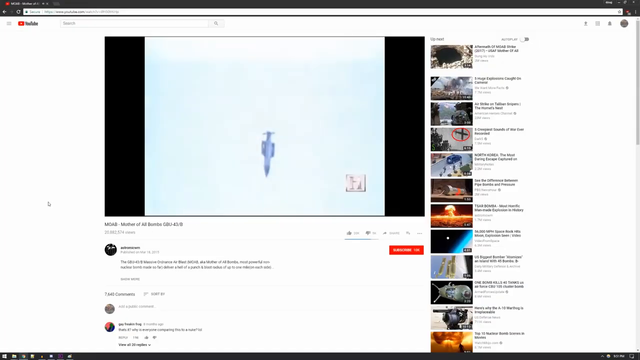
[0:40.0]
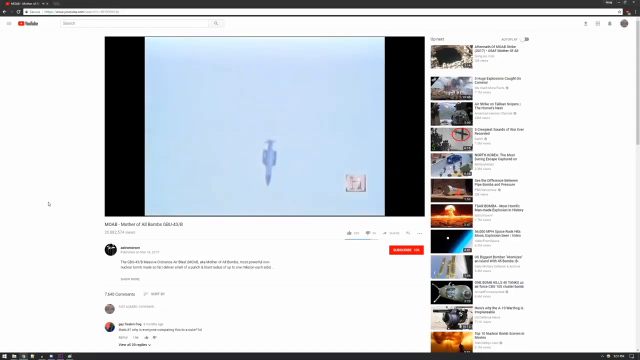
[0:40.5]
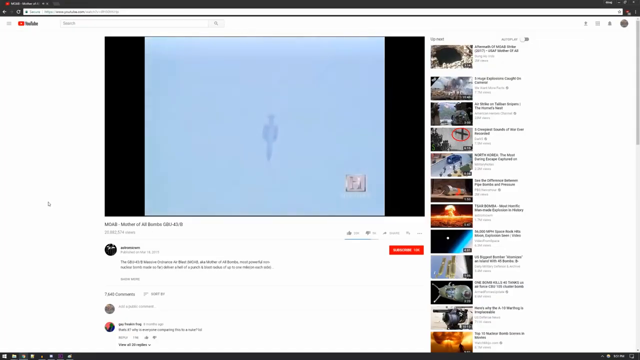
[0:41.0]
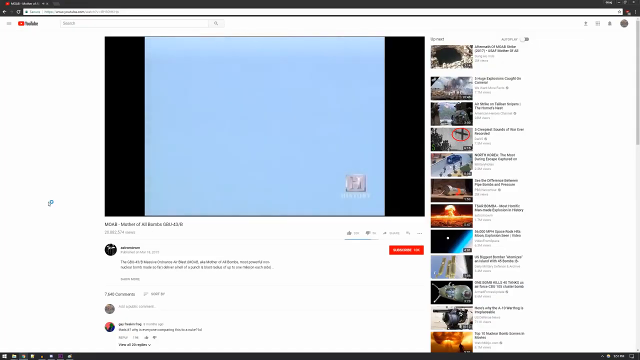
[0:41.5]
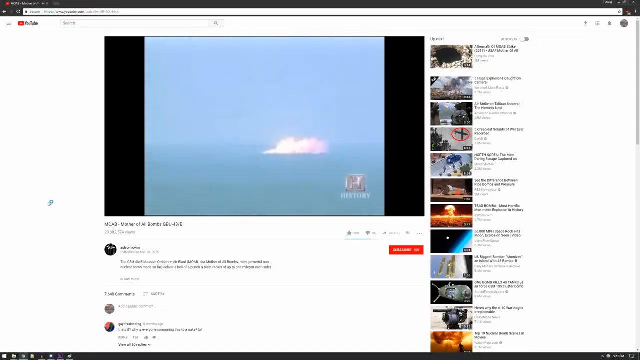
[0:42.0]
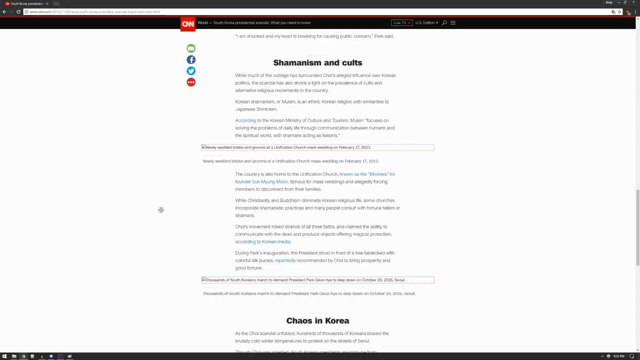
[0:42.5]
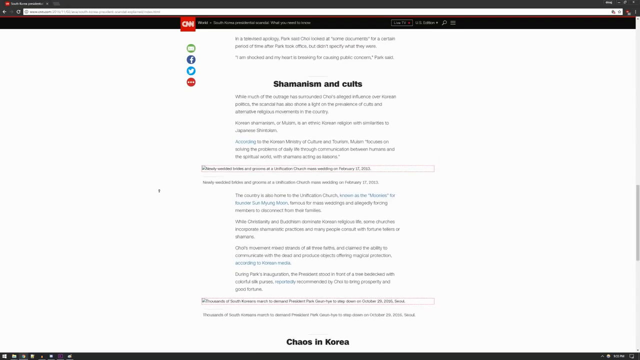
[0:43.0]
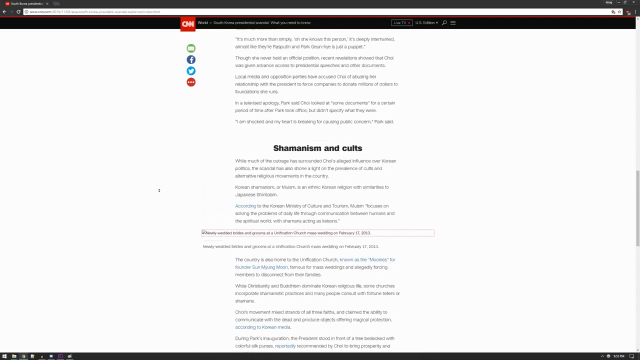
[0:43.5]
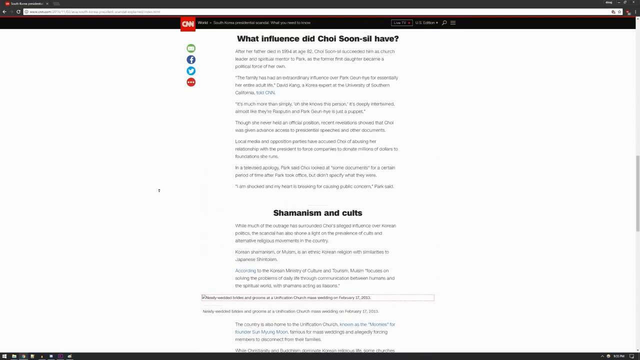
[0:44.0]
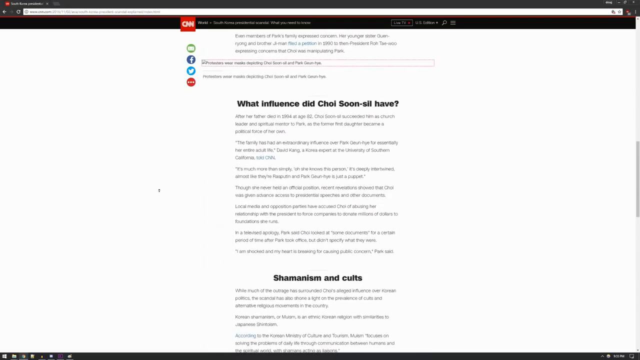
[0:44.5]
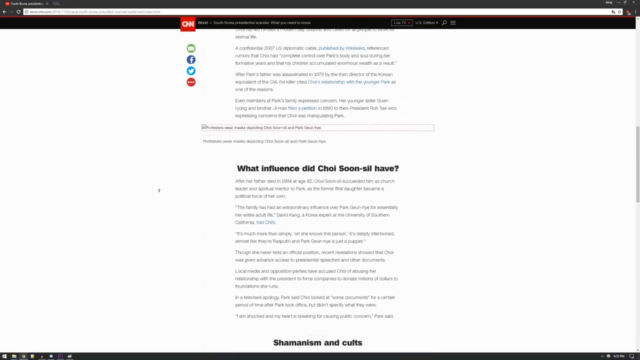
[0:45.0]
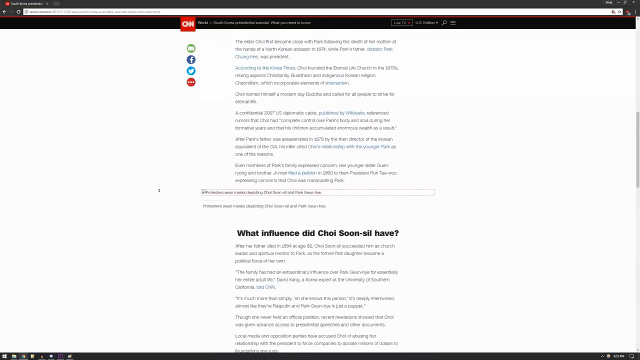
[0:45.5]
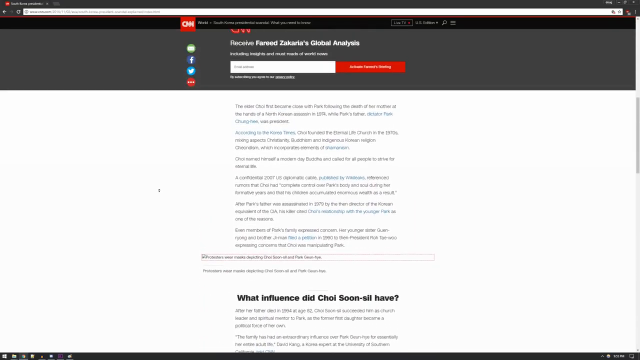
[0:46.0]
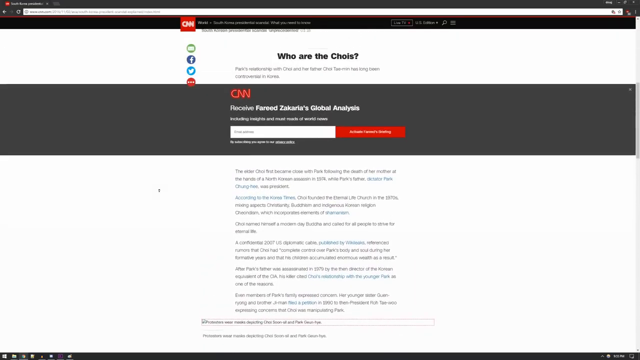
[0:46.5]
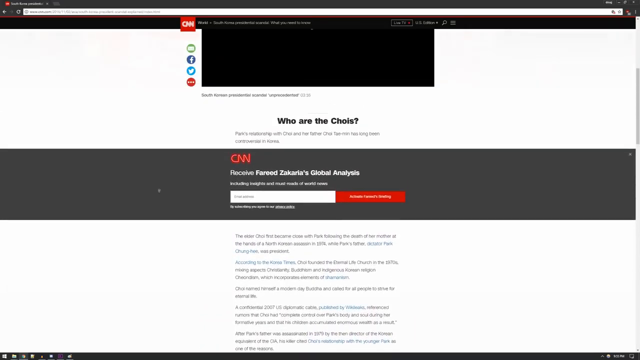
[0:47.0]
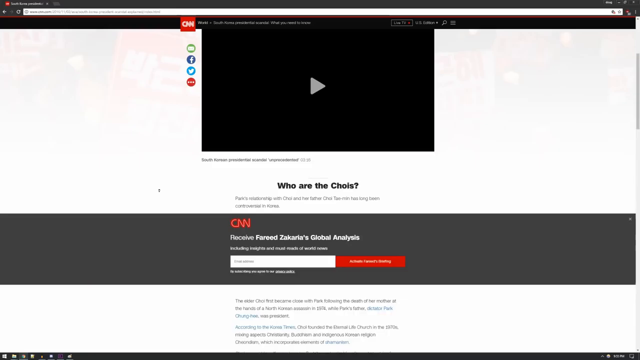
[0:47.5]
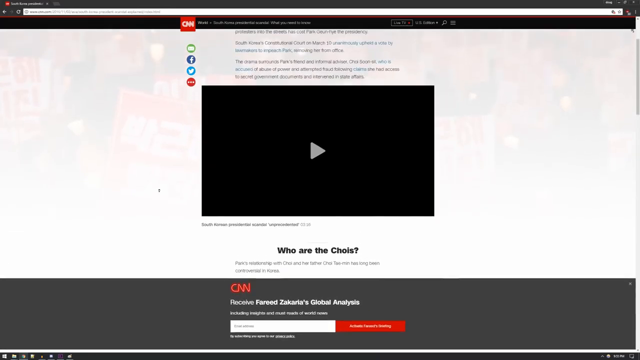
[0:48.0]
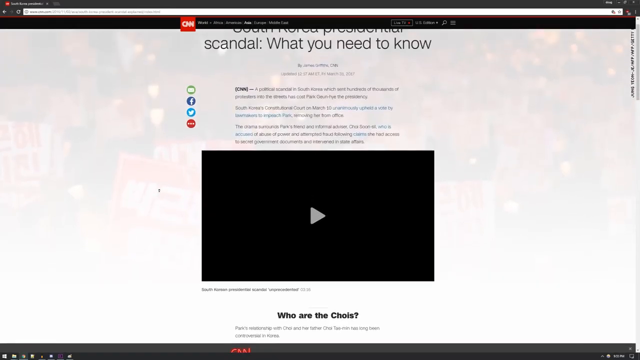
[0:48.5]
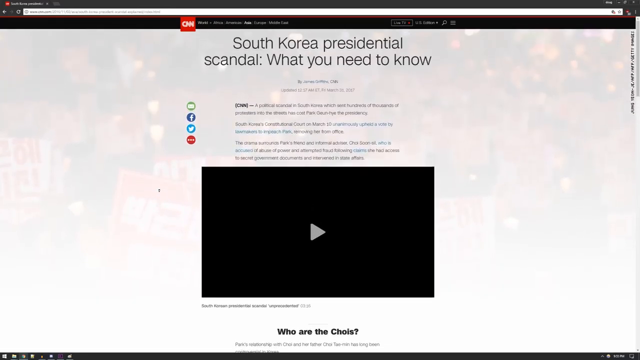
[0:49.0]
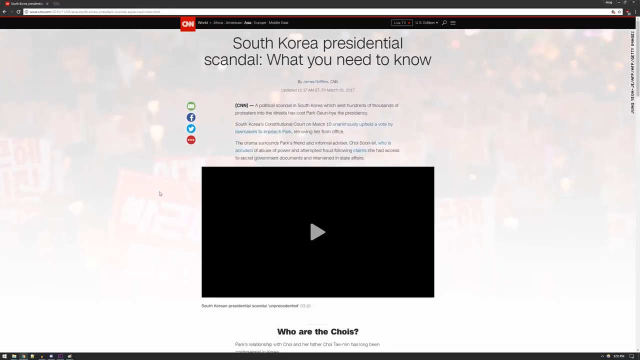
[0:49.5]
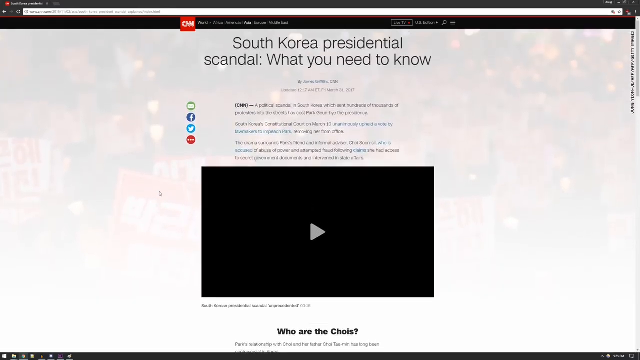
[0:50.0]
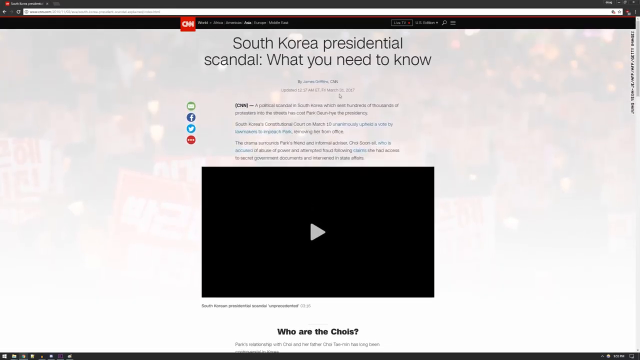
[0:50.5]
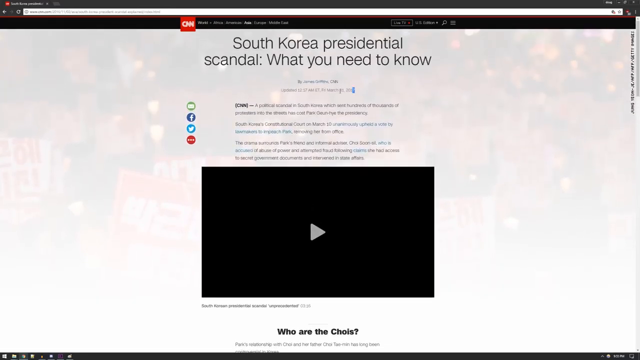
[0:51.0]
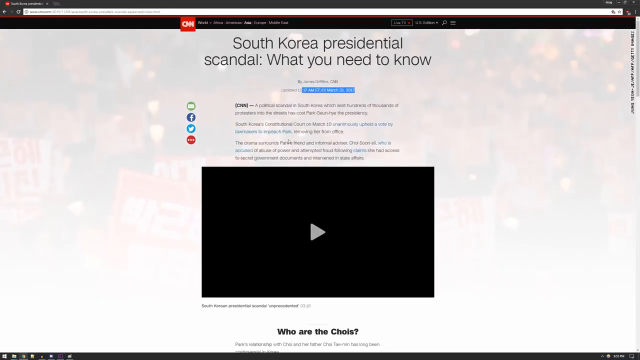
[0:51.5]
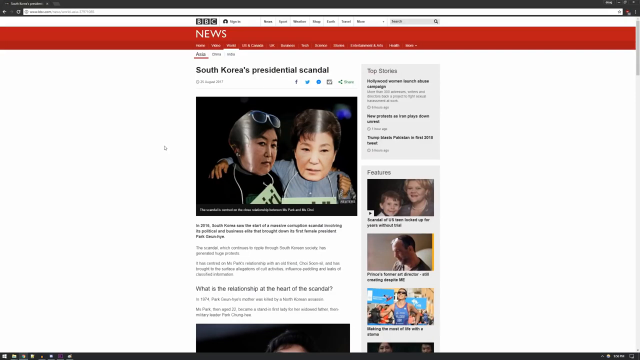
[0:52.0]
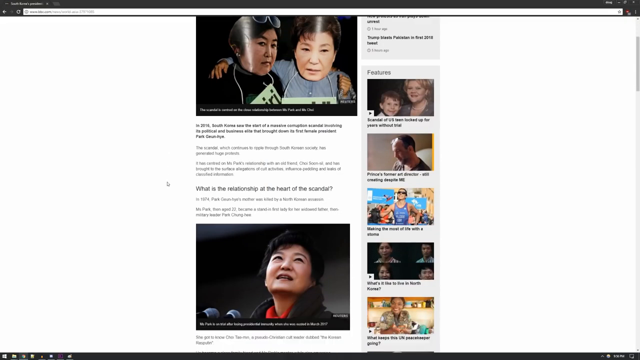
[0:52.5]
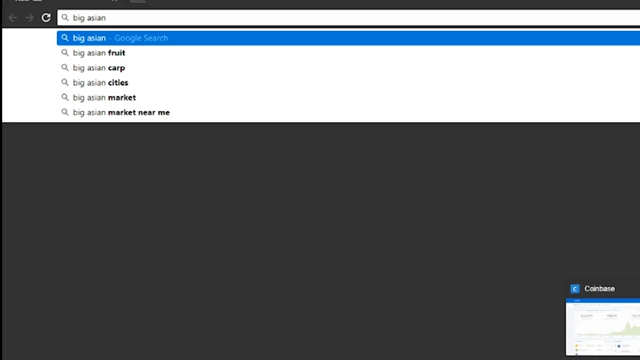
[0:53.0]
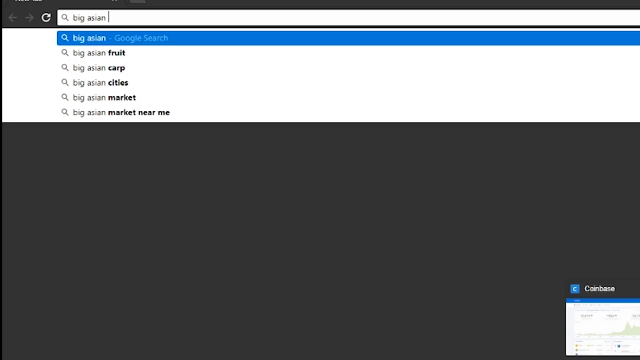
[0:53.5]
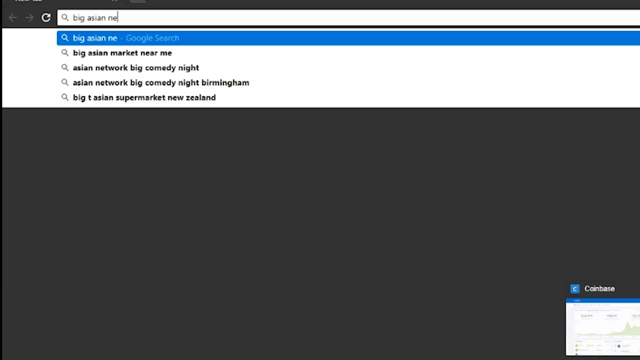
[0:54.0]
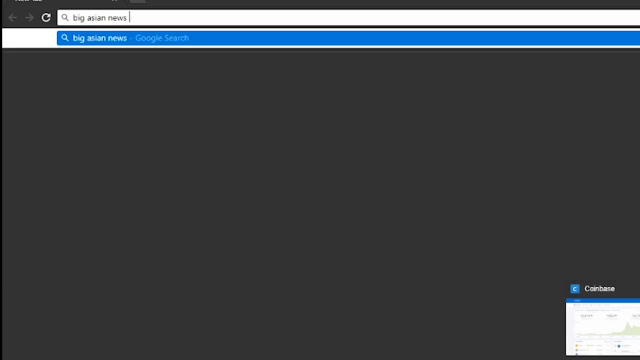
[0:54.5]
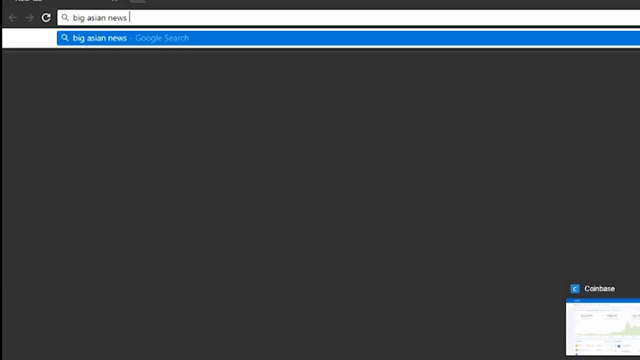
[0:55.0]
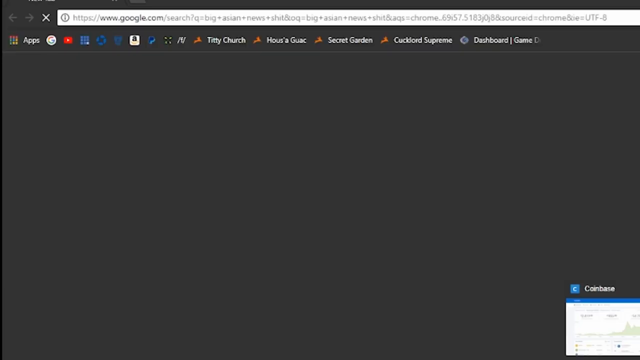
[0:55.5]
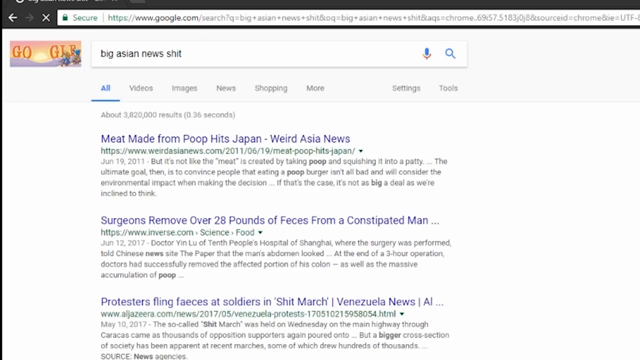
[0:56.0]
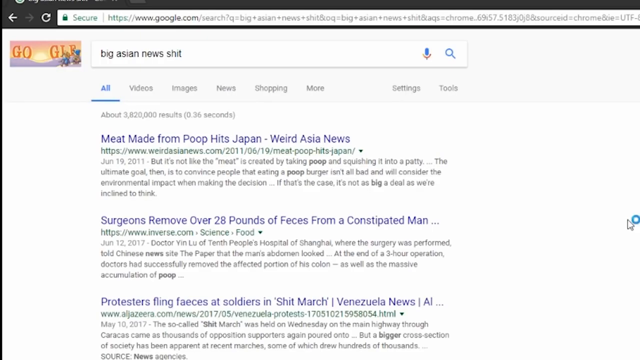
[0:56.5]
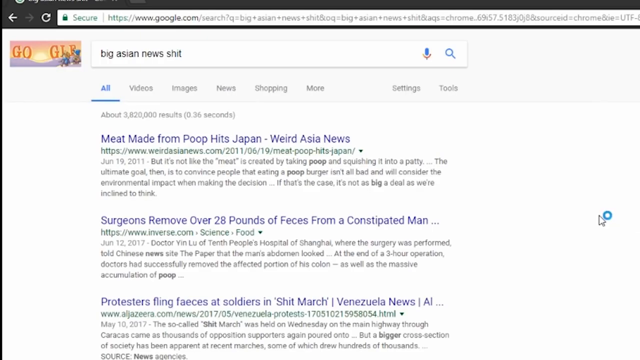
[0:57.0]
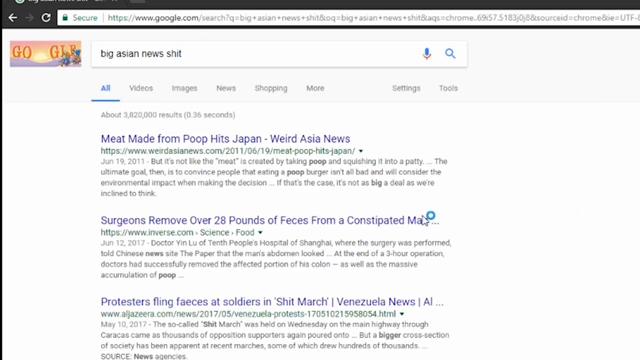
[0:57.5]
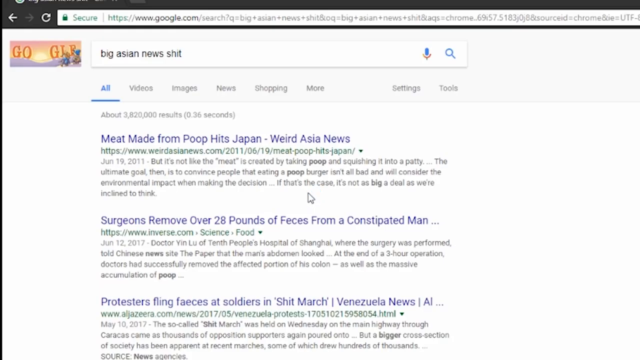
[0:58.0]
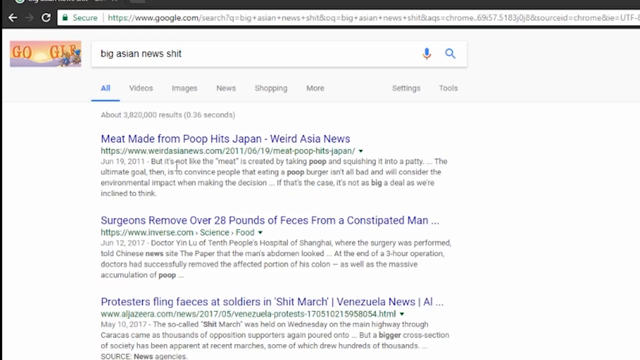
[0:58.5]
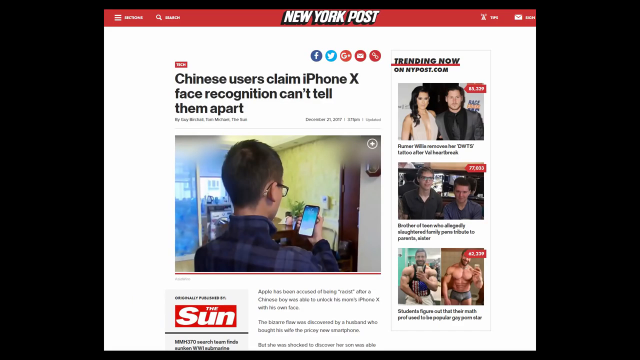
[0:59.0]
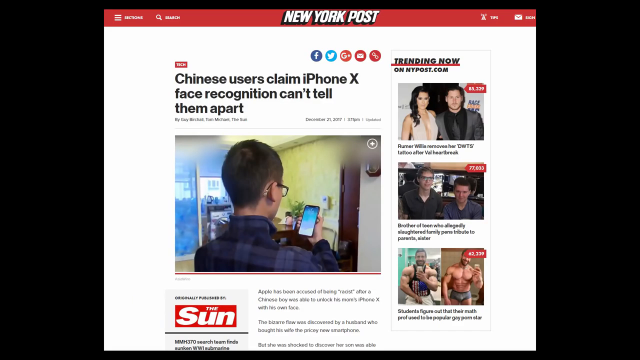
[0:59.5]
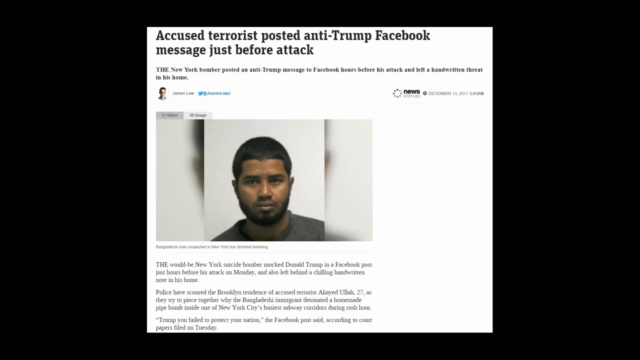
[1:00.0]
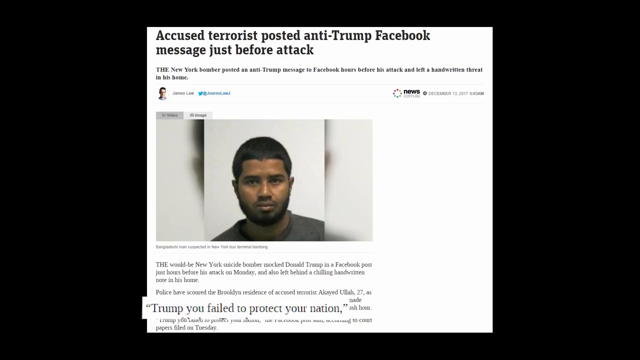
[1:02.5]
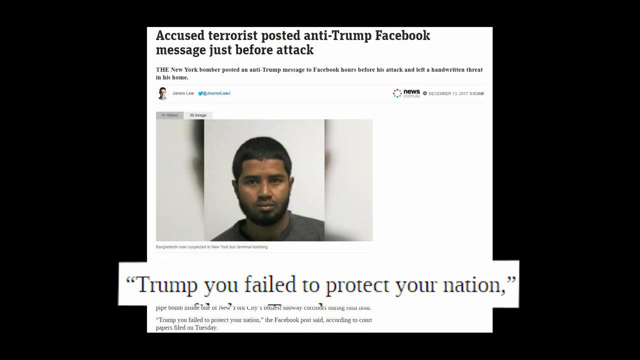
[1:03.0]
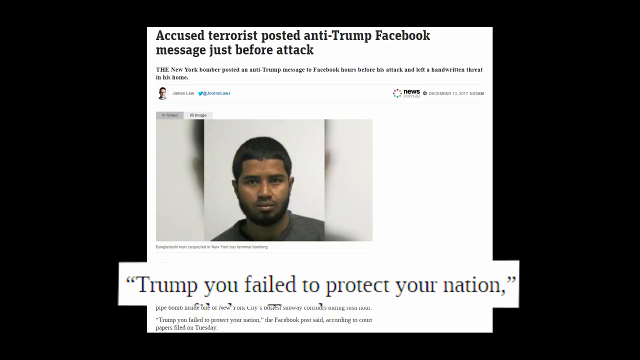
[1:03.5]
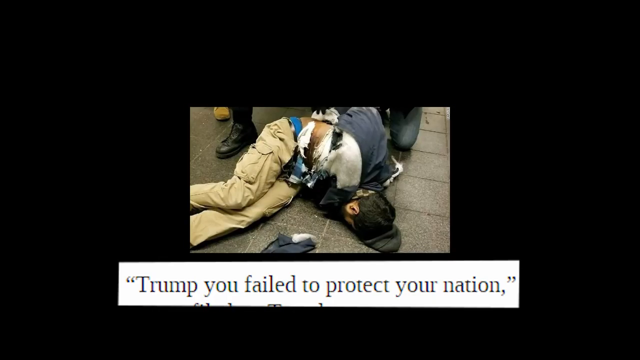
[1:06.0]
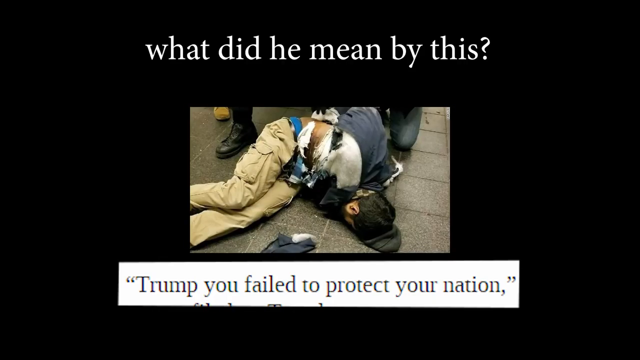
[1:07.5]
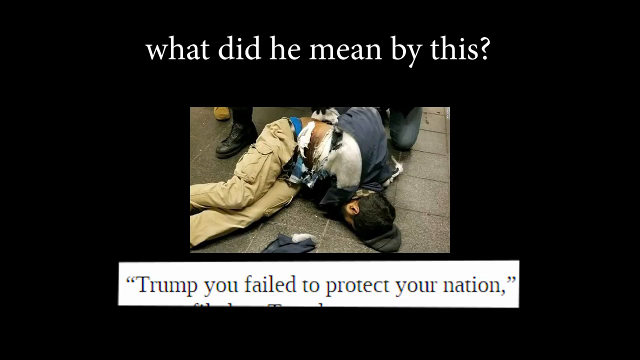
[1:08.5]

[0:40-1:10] A website is shown. A missile launches and lands in water. The page scrolls through an article titled "South Korea presidential scandal, what you need to know", and someone highlights text in blue. Someone types in a website address, and many different stories and pictures pop up, all negative press against Trump. There is a picture of a falling man with text saying something about voting for this man, as well as pop-ups of Asian people. A picture shows a person who looks like he is almost in jail. Text reads "Trump, you failed to protect the nation." A person is curled up on his side on the sidewalk with people around him.